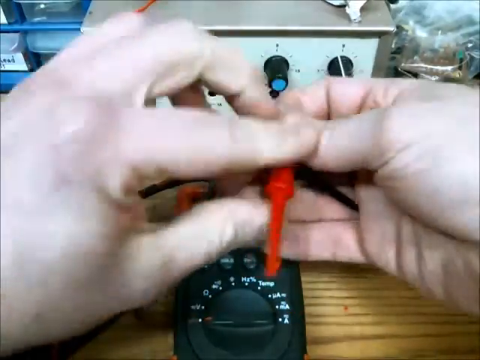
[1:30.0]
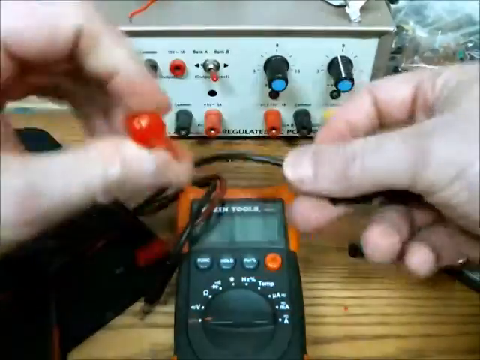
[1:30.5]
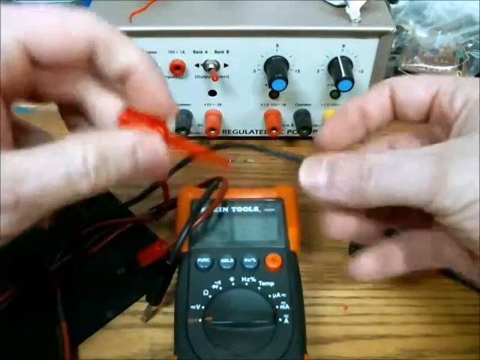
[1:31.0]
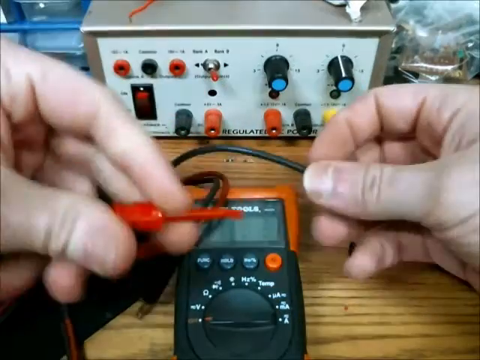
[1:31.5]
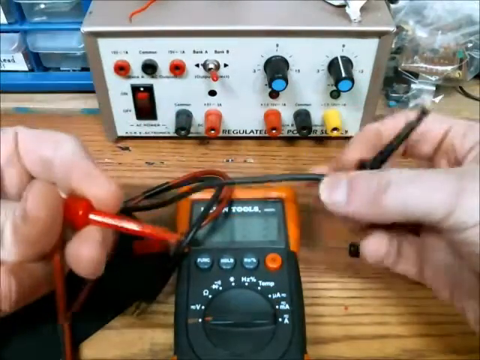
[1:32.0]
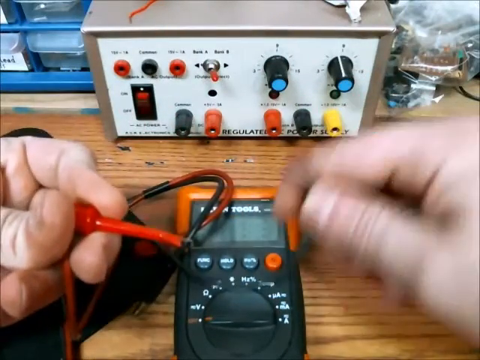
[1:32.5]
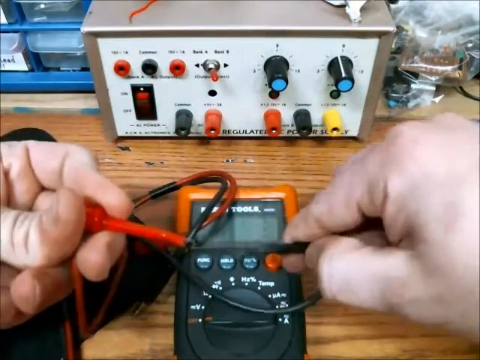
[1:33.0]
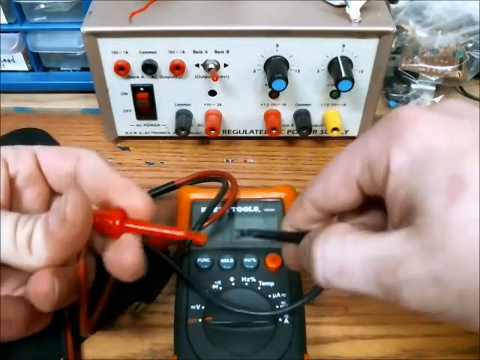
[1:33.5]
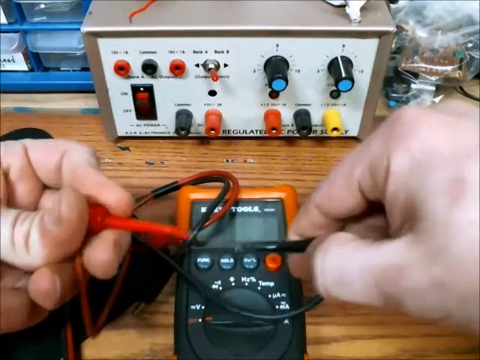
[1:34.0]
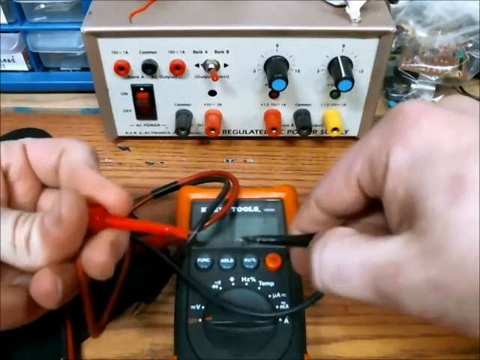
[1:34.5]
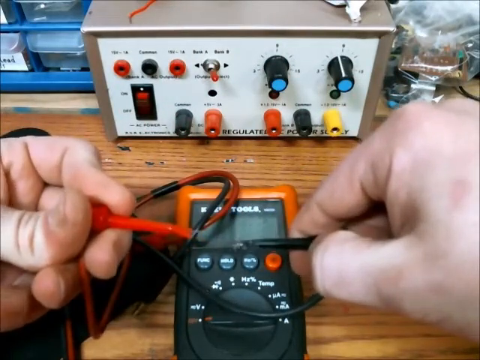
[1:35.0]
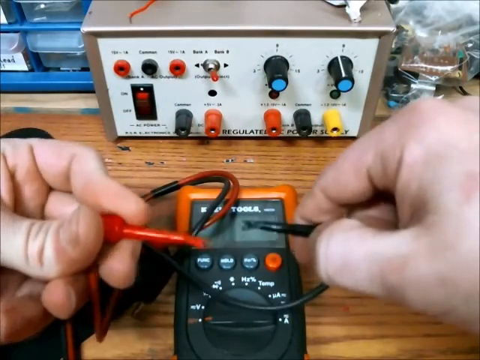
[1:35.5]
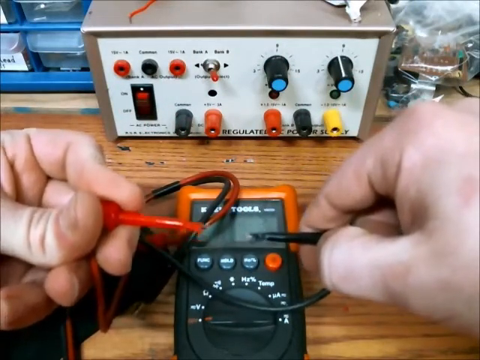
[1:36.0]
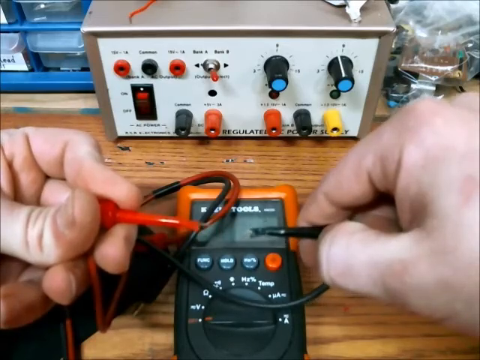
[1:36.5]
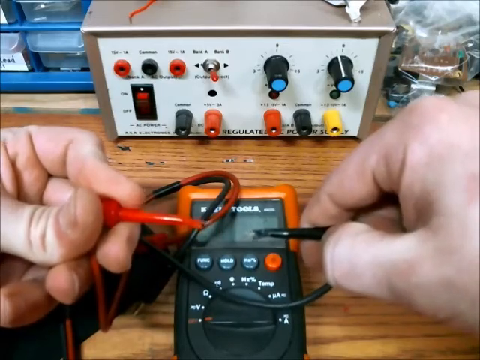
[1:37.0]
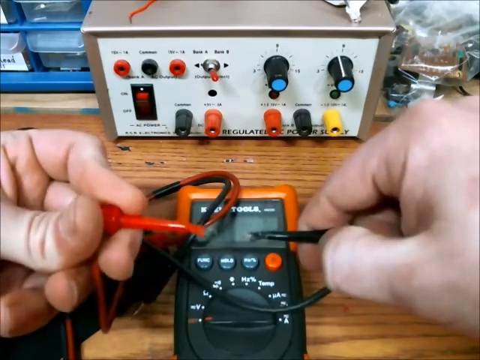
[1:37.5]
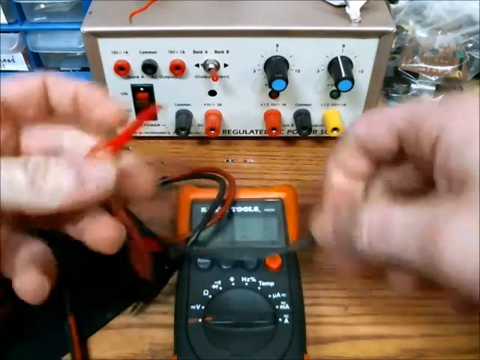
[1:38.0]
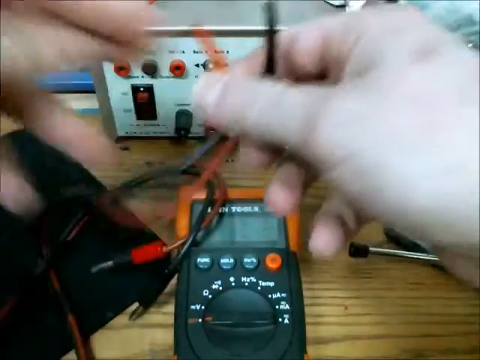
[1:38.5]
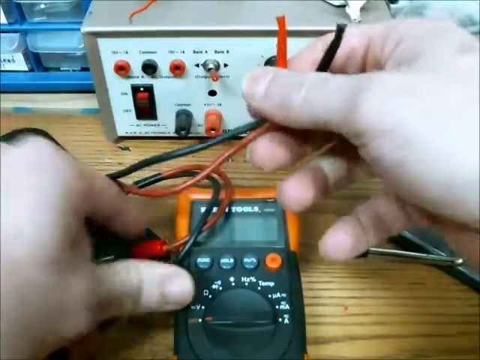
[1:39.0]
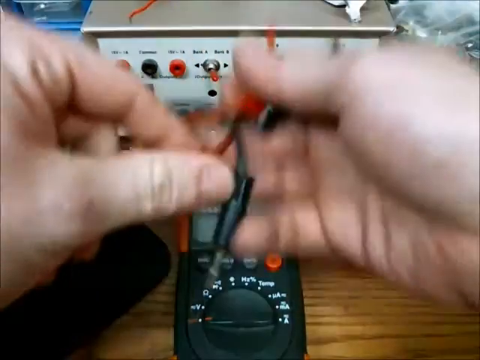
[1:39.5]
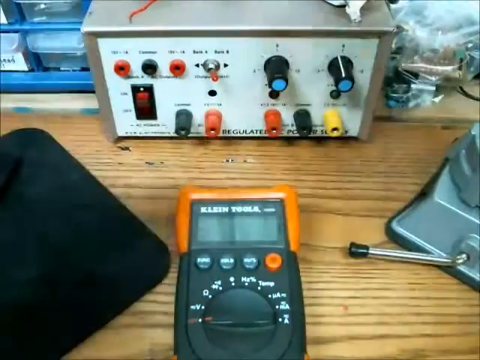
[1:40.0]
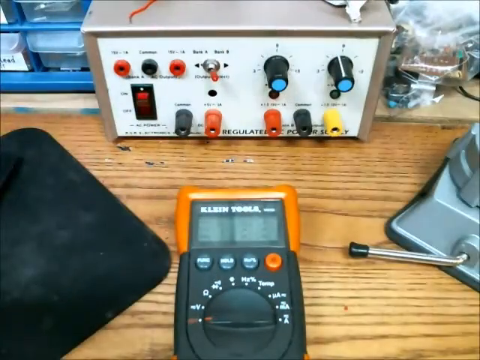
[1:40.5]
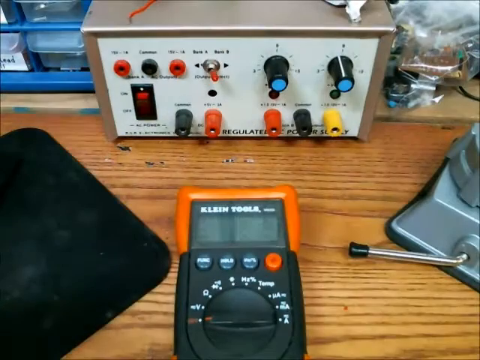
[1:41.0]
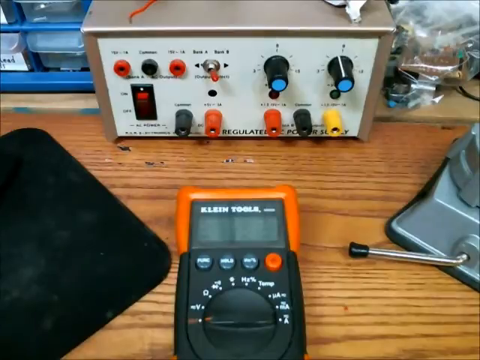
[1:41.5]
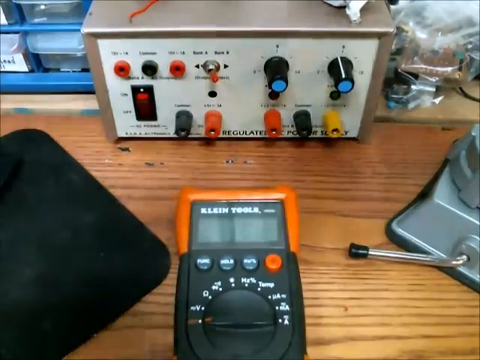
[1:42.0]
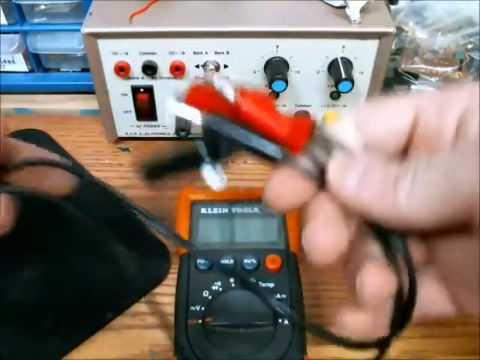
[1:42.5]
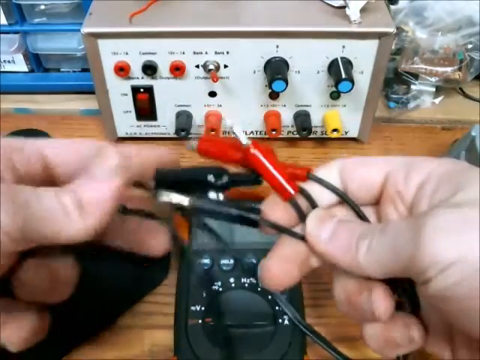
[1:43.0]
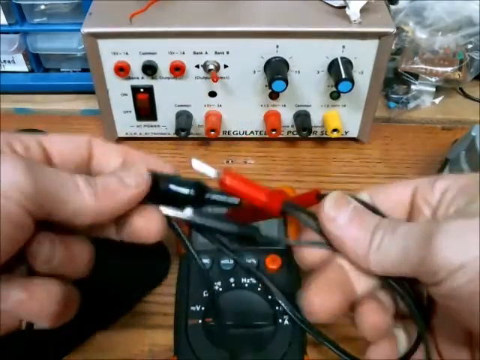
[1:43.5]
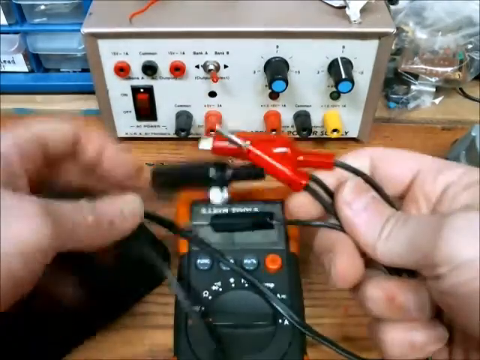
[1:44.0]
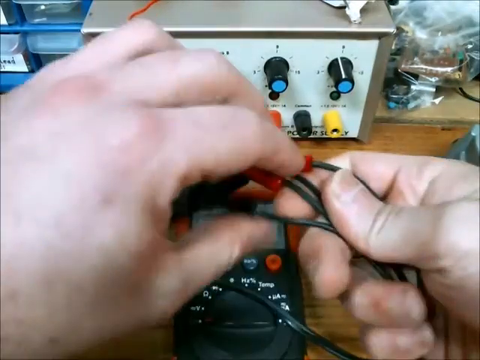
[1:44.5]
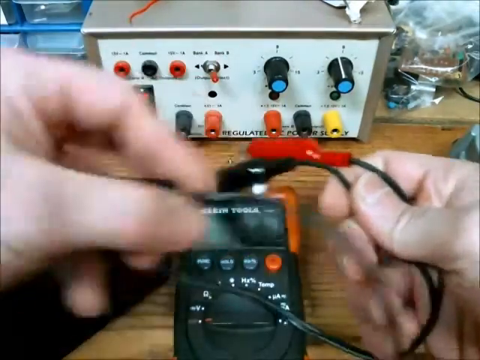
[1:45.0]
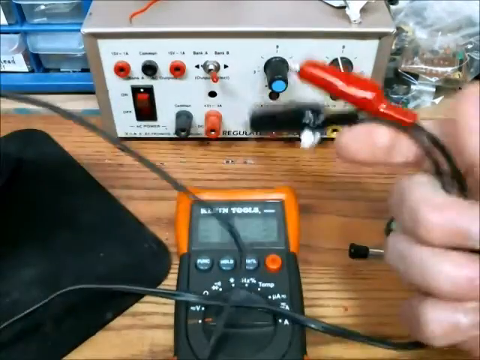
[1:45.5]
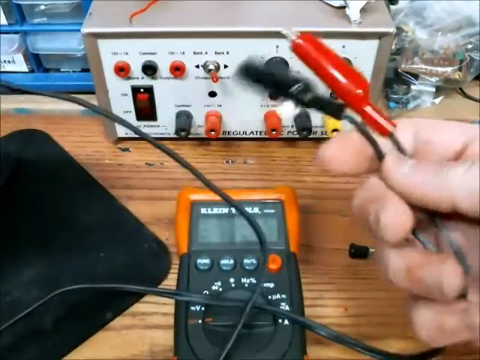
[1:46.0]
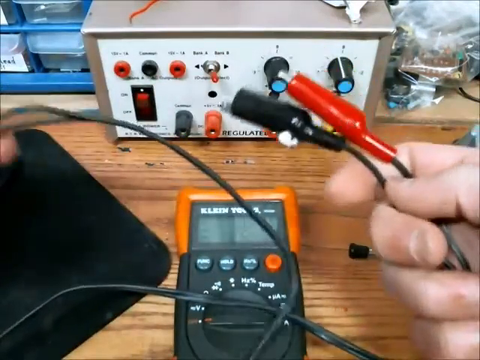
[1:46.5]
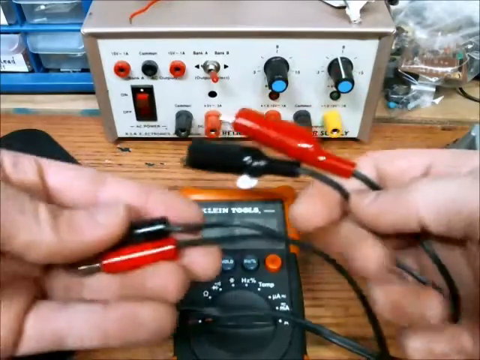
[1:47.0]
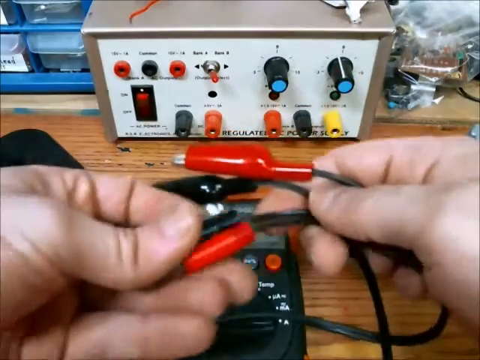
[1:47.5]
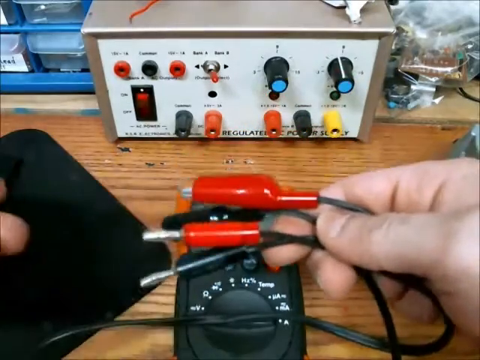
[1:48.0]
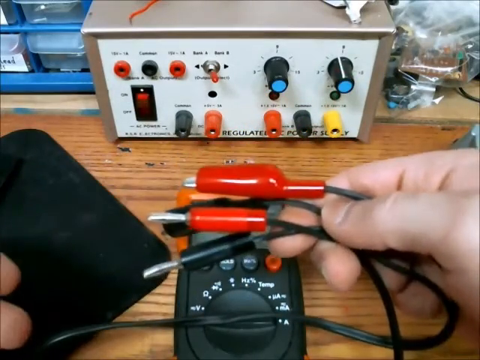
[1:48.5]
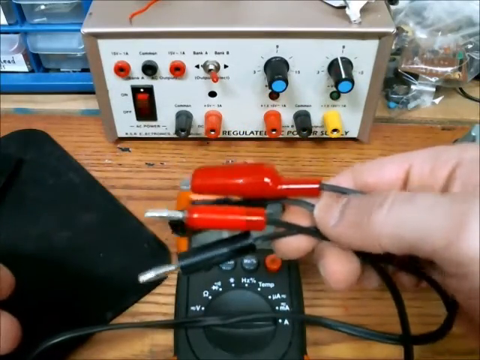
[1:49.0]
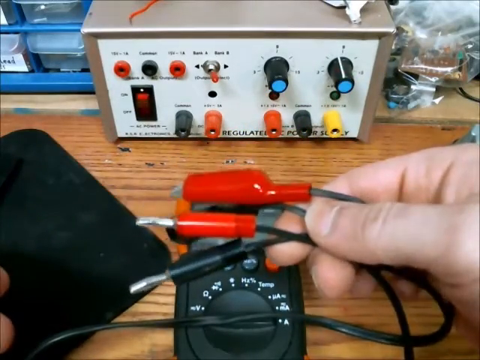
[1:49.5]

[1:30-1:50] Both hands hold wires in front of the electronic box with the two black knobs with blue buttons, and the hands are above a black and orange tool. They turn a black wire and a red wire toward each other but do not touch them together. They take the wires out of the frame and bring them back; there appear to be negative and positive ends, four of them. The shot returns to the hands holding the wires, which look kind of like jumper cables: a red one with two ends and a black one with two ends.